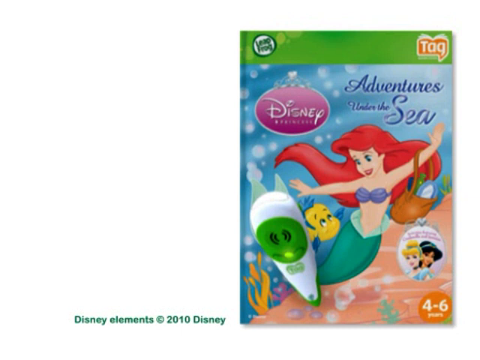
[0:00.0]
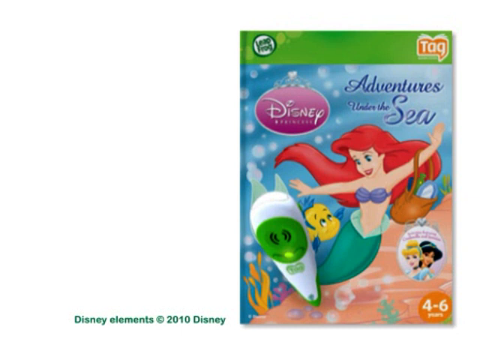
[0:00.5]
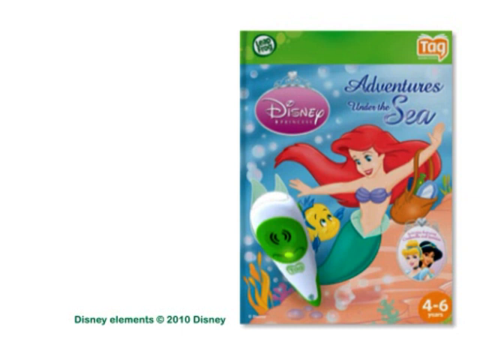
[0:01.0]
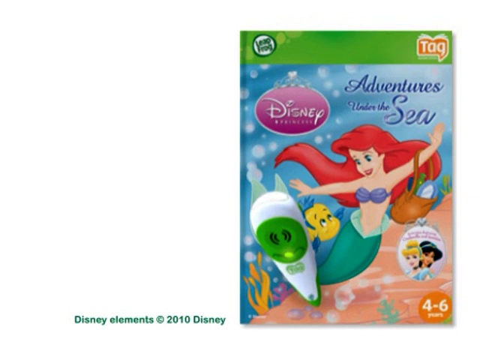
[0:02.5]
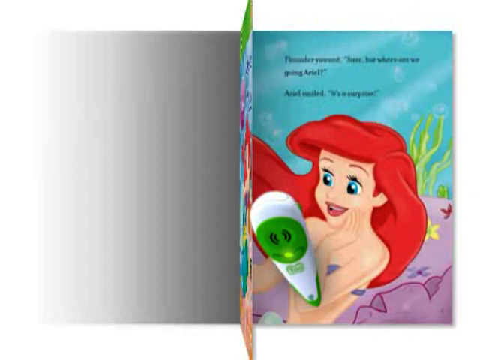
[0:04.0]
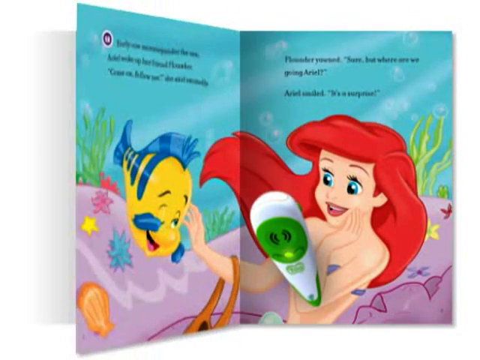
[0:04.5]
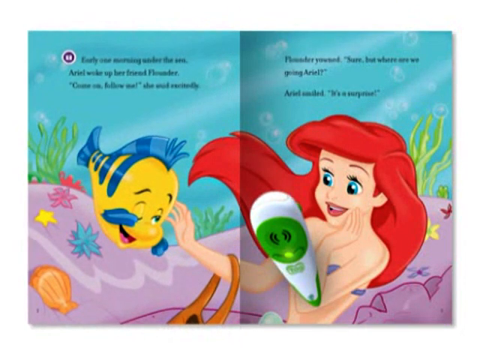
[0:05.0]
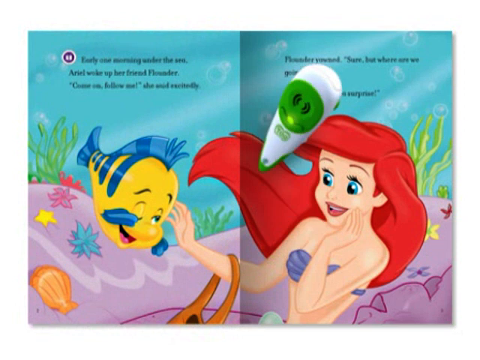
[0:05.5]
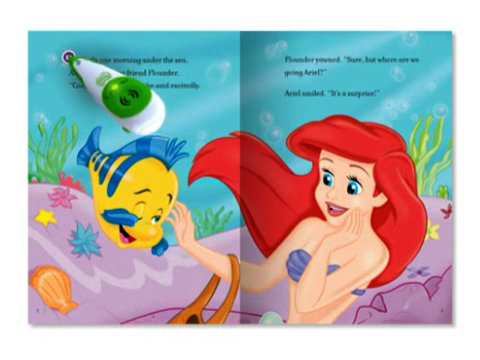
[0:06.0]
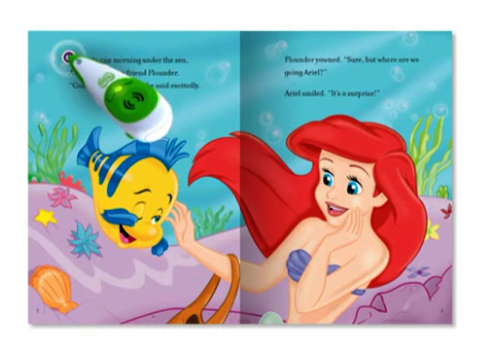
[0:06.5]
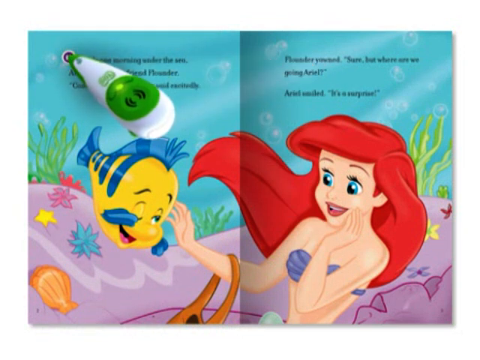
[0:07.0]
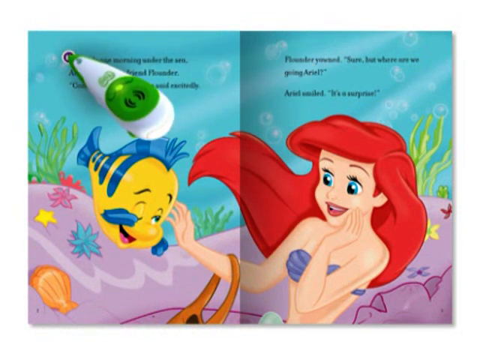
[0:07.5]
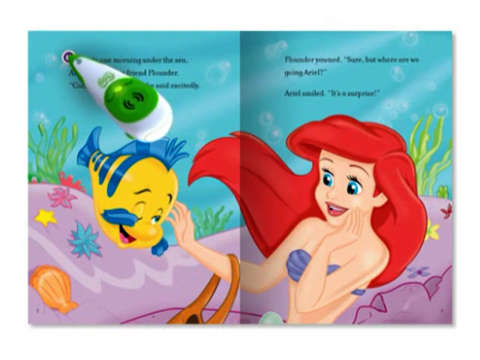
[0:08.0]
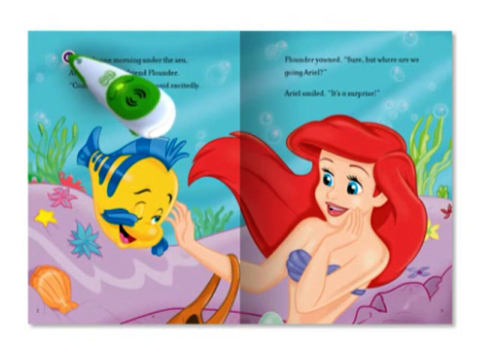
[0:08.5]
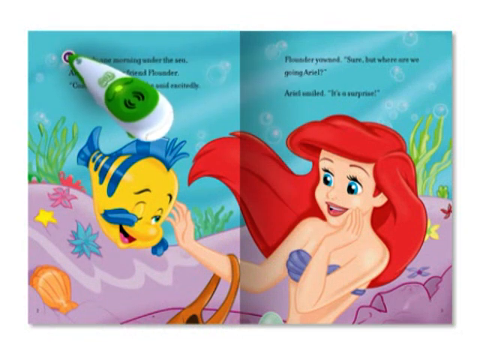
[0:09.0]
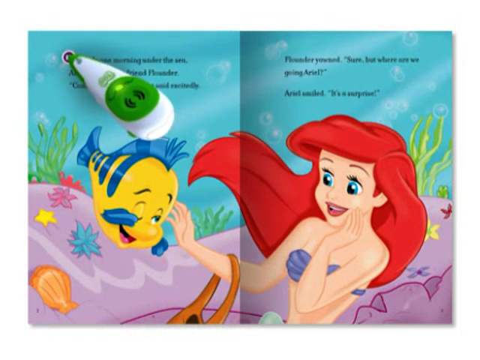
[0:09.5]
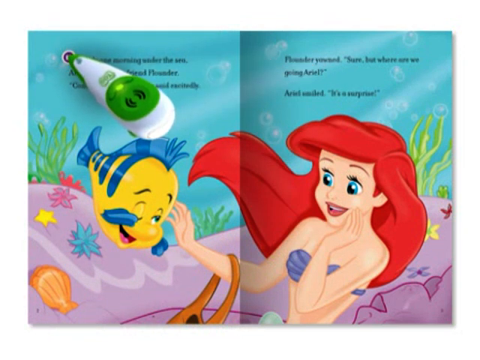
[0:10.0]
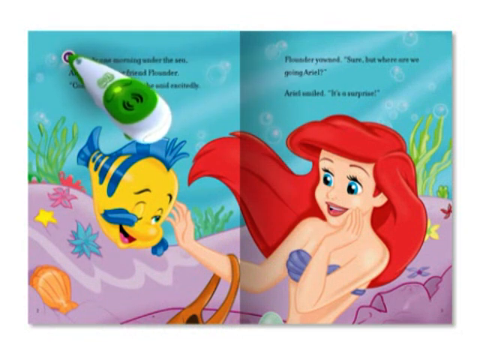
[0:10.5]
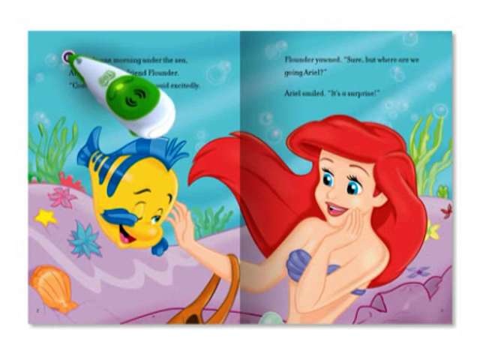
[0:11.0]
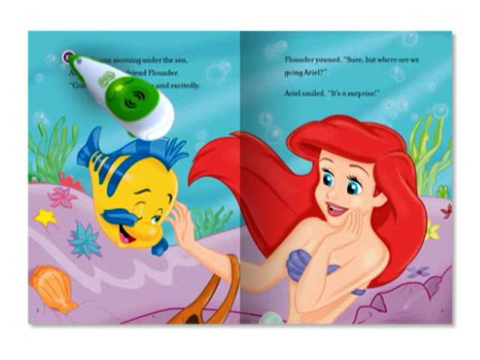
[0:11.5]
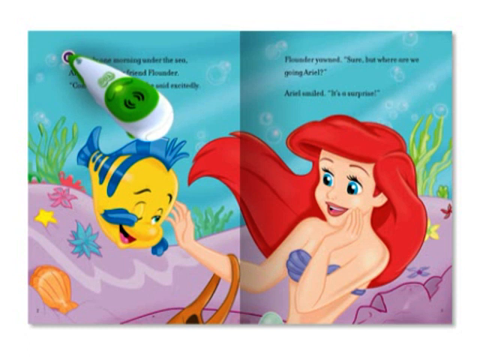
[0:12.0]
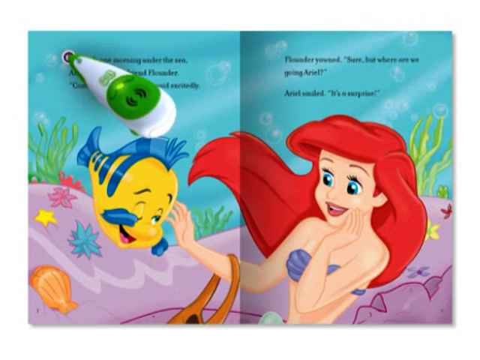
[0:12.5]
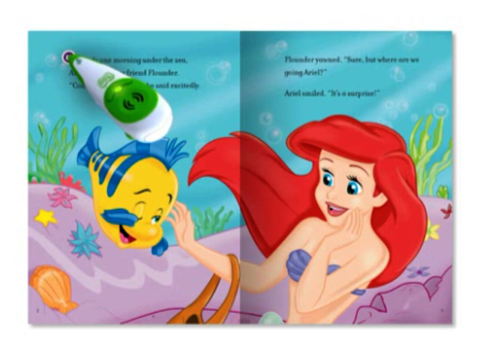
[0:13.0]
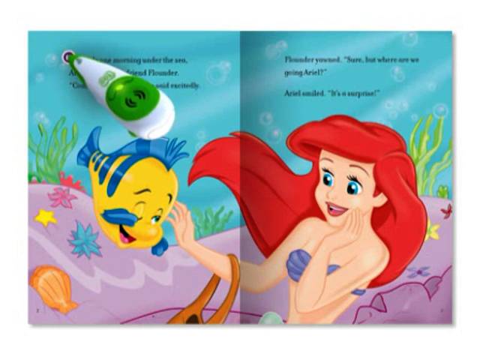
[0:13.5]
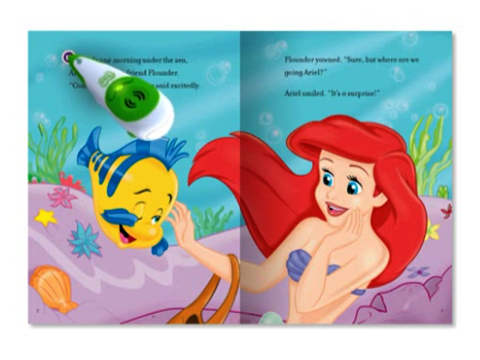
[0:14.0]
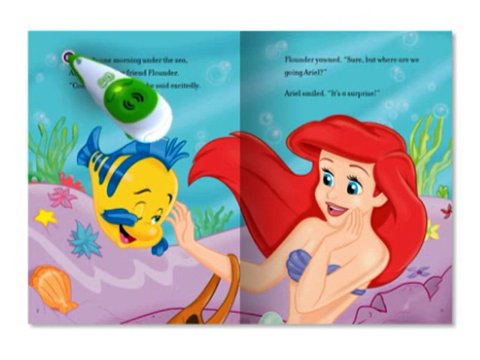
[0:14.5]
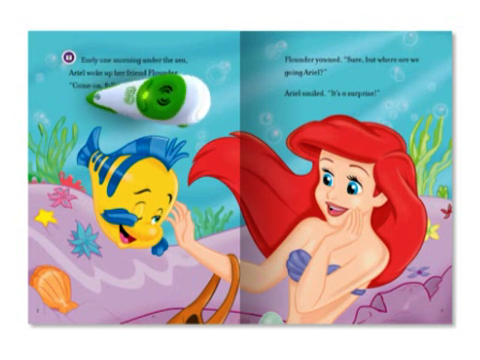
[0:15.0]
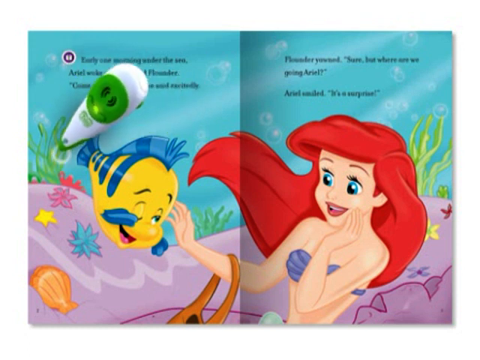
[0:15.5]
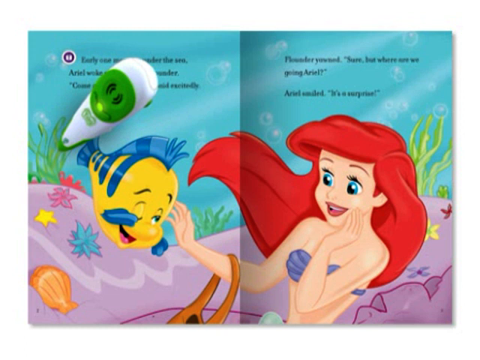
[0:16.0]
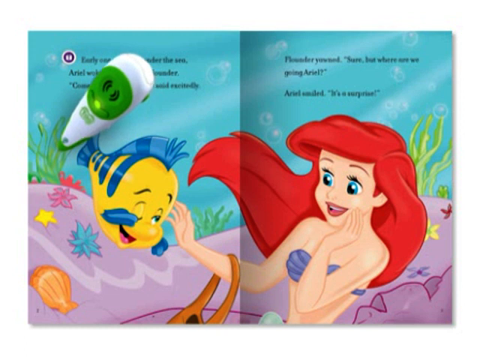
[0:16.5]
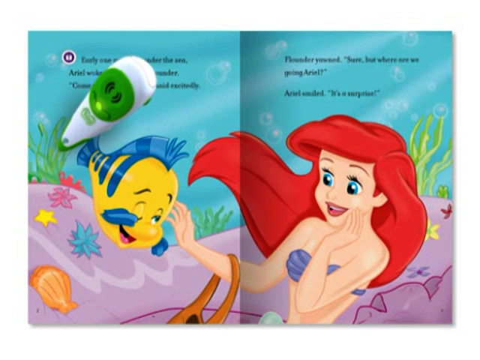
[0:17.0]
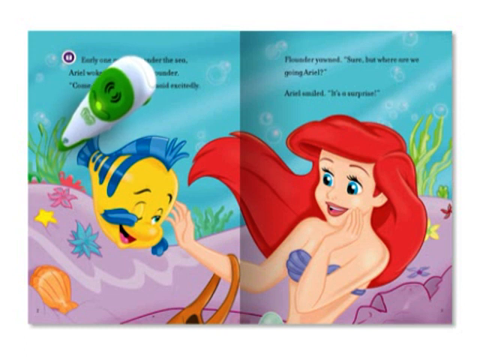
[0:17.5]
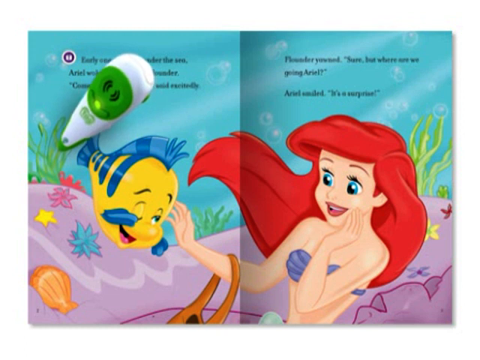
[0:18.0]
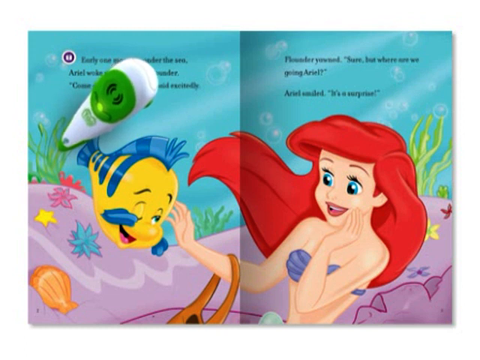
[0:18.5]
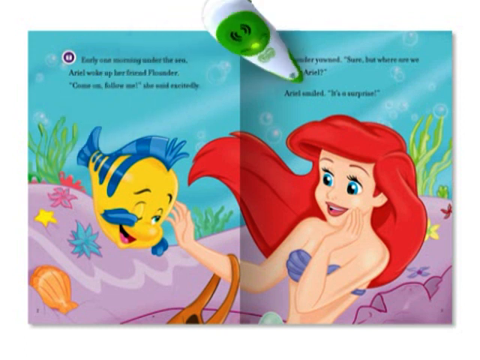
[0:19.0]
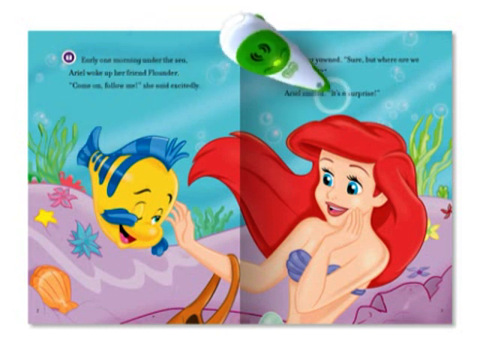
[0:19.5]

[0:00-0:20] A Disney booklet is shown, with "Disney Elements 2010 Disney" in the lower left corner. The book slowly opens, revealing the mermaid princess Ariel on the right page and a yellow fish with blue stripes on the left. The scene is underwater, with different types of water plants in the background. Text on the page is a conversation between the fish and the mermaid. A device presses on icons in the upper left corner, probably a text-to-voice device that reads out what is pressed. It moves from place to place, including pressing on the kelp.